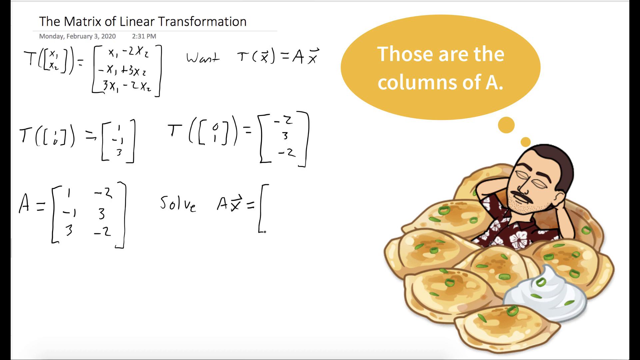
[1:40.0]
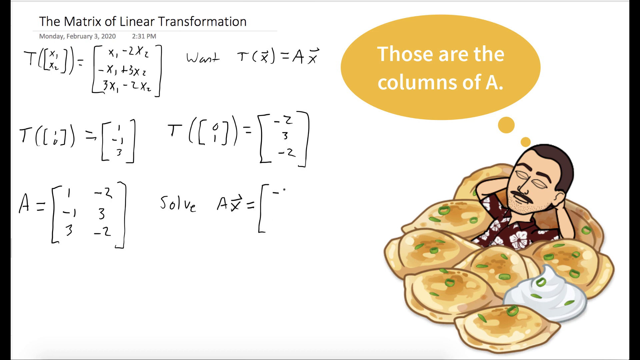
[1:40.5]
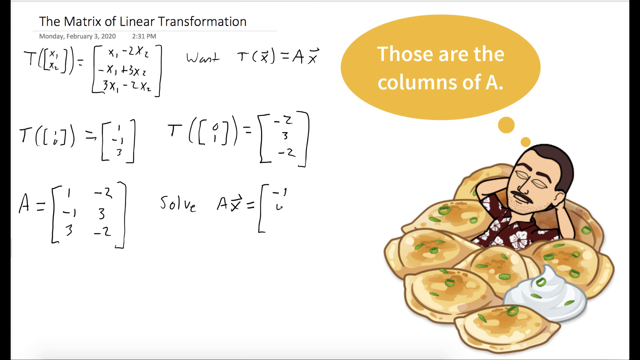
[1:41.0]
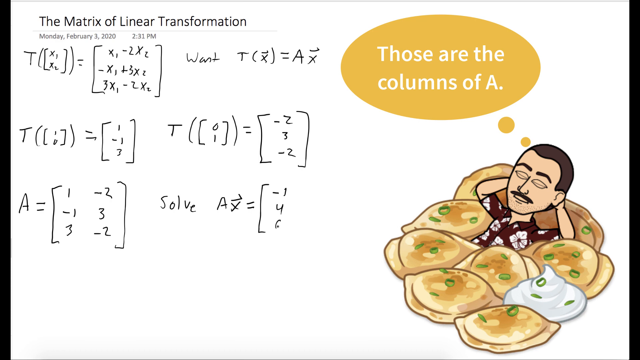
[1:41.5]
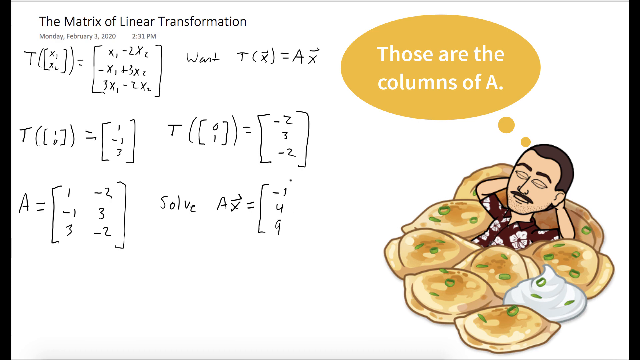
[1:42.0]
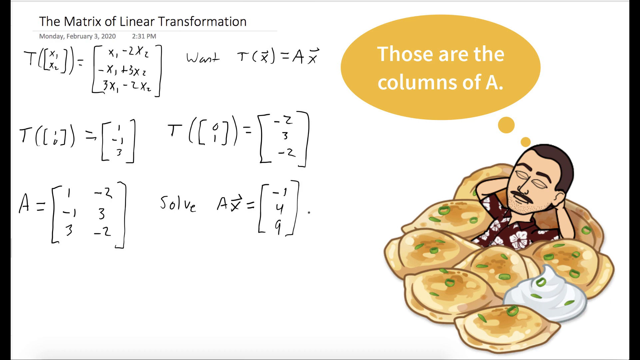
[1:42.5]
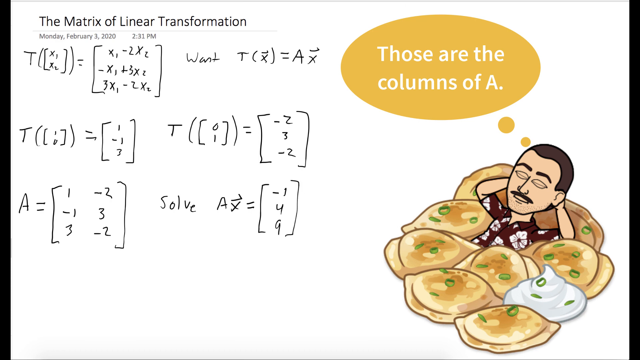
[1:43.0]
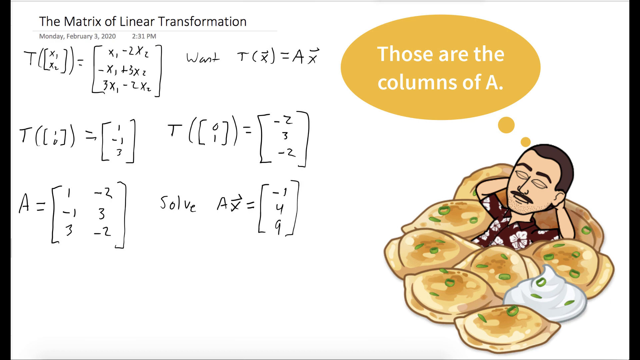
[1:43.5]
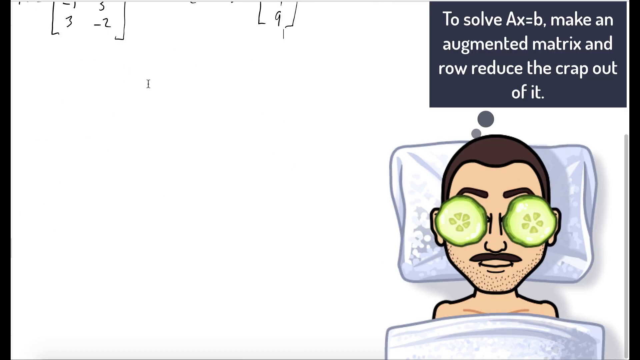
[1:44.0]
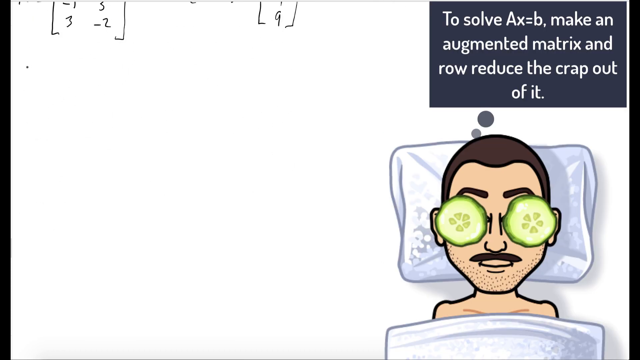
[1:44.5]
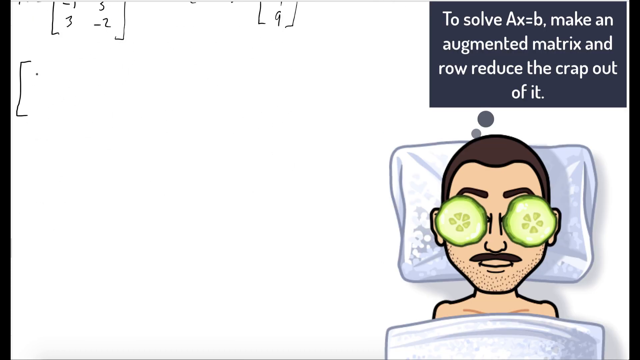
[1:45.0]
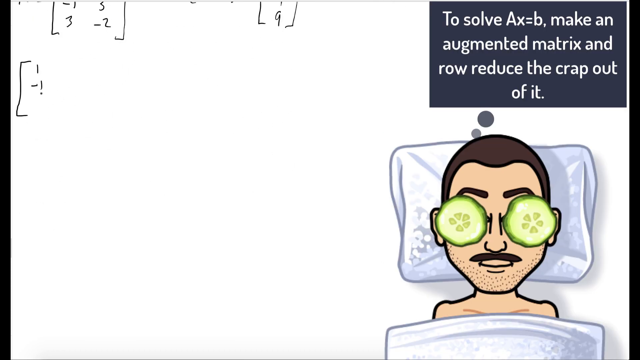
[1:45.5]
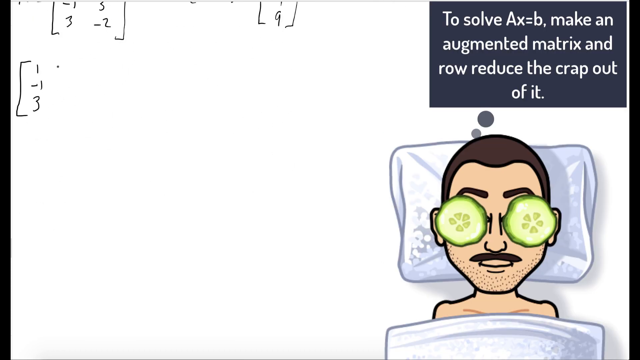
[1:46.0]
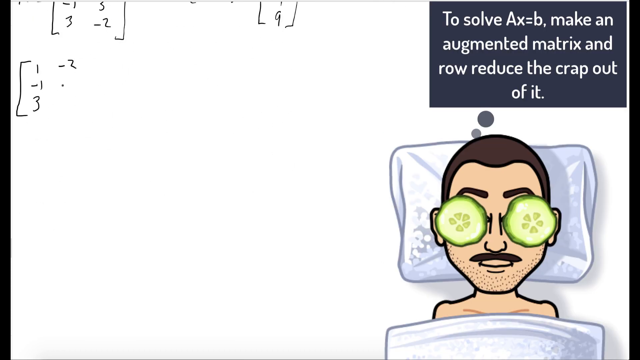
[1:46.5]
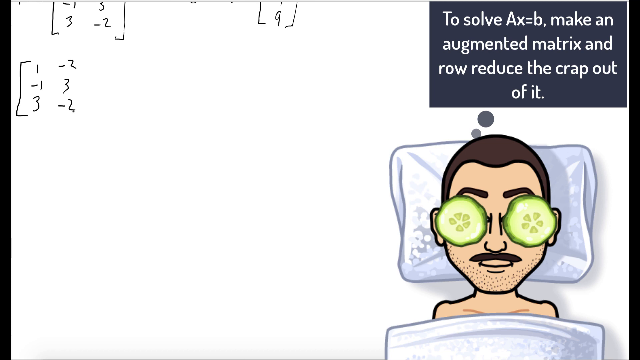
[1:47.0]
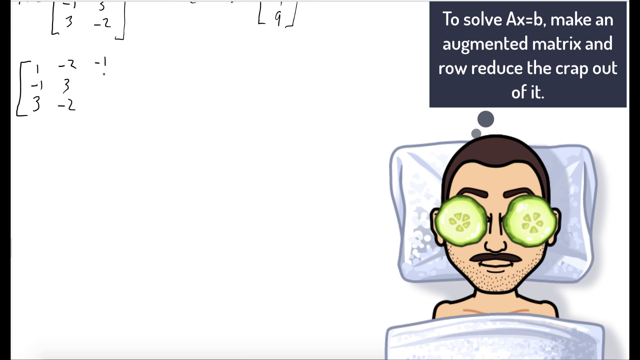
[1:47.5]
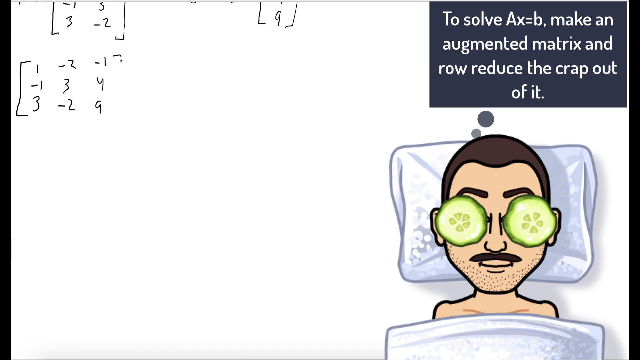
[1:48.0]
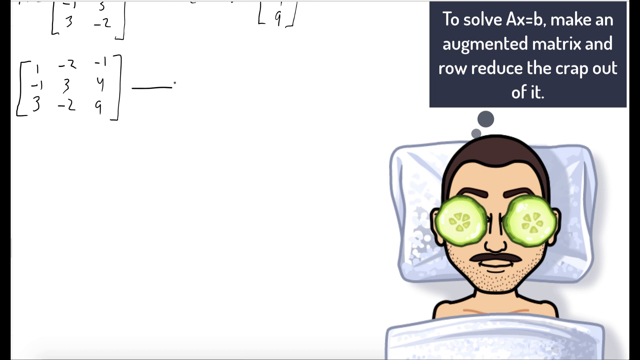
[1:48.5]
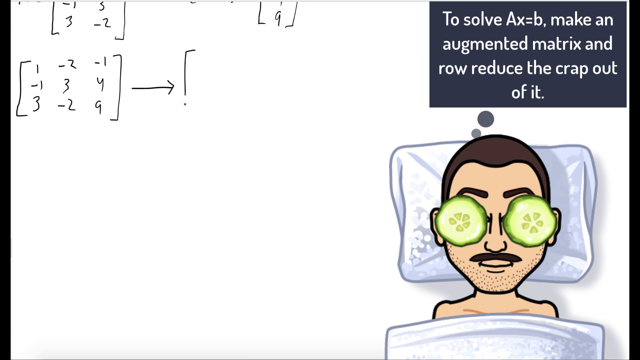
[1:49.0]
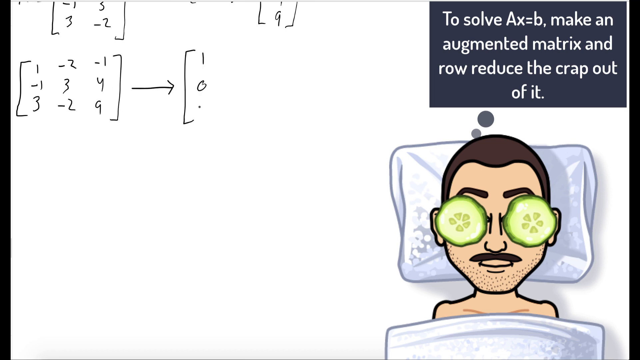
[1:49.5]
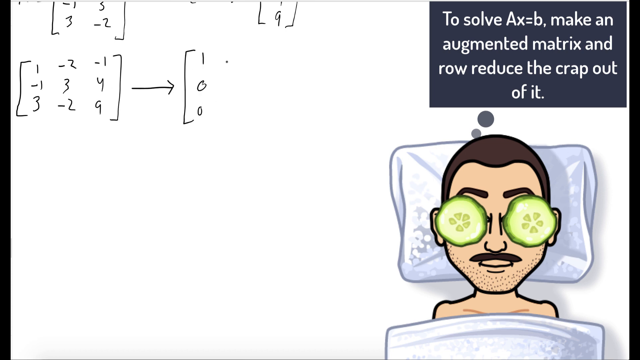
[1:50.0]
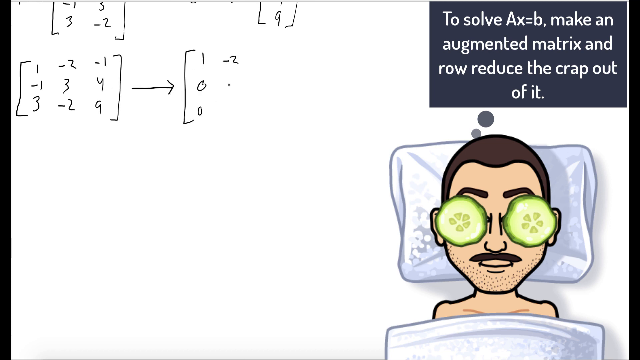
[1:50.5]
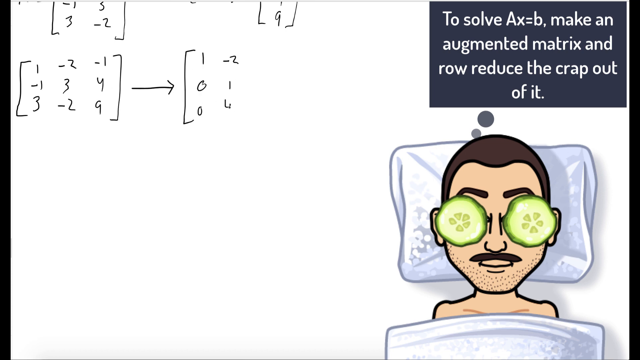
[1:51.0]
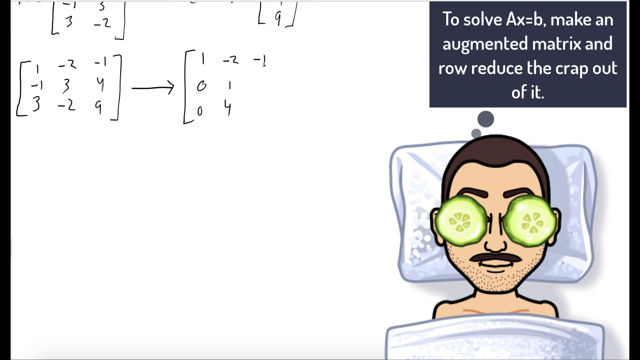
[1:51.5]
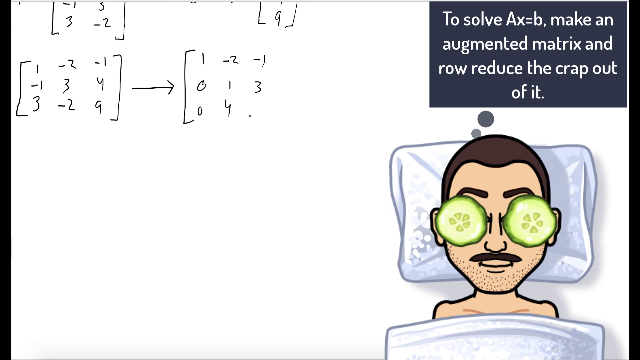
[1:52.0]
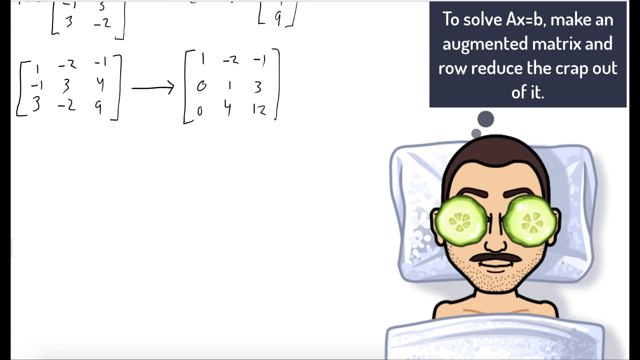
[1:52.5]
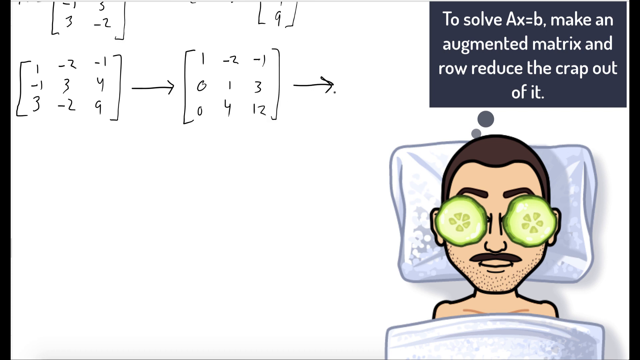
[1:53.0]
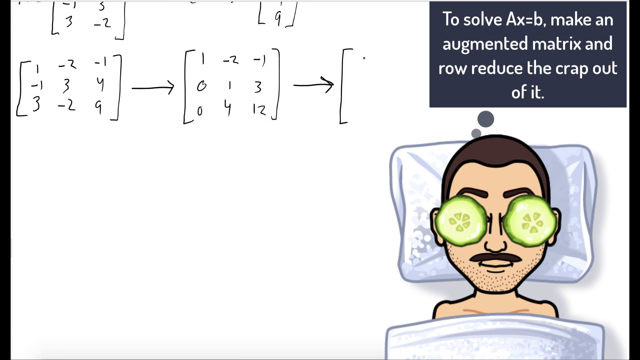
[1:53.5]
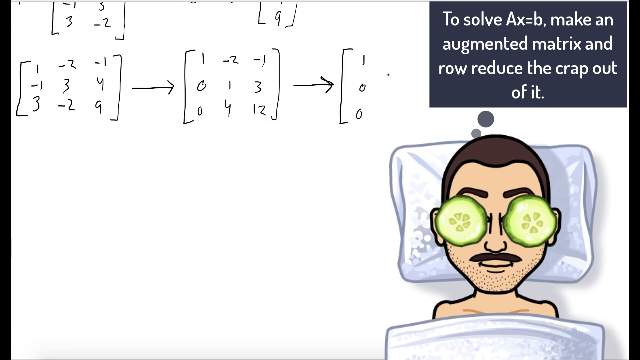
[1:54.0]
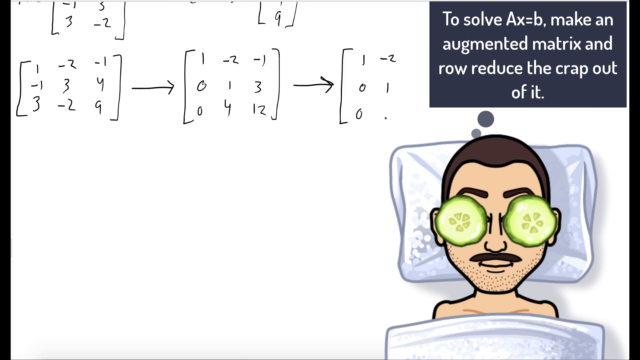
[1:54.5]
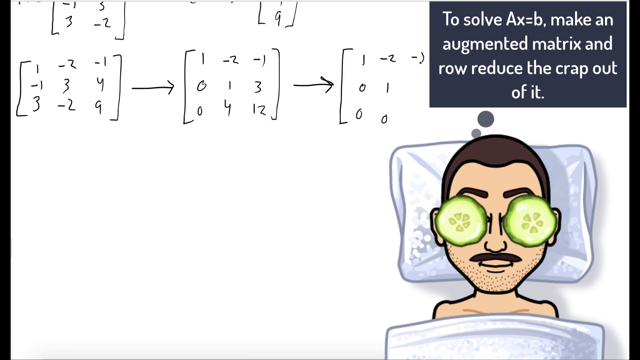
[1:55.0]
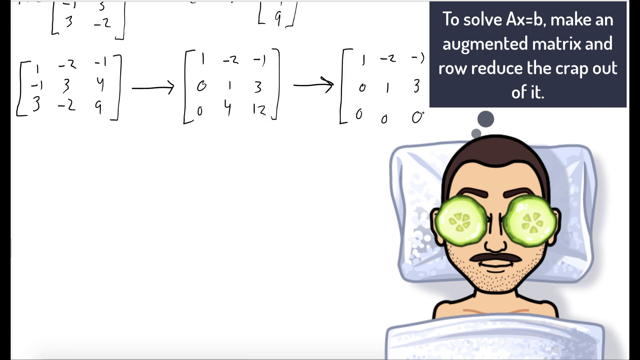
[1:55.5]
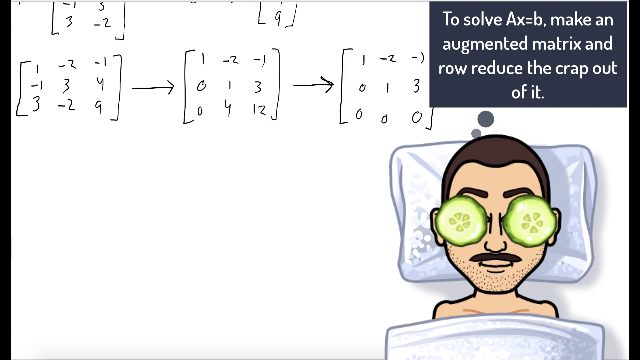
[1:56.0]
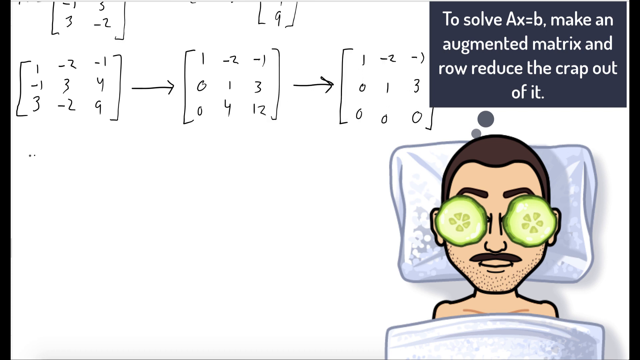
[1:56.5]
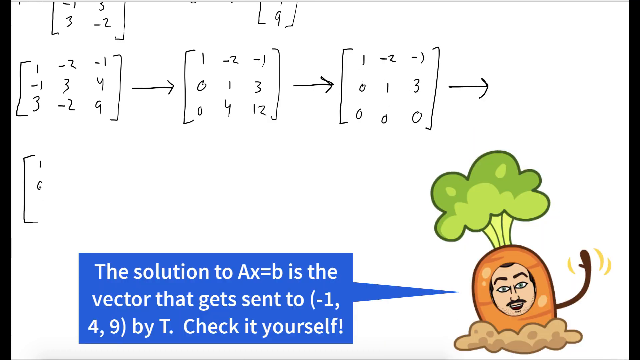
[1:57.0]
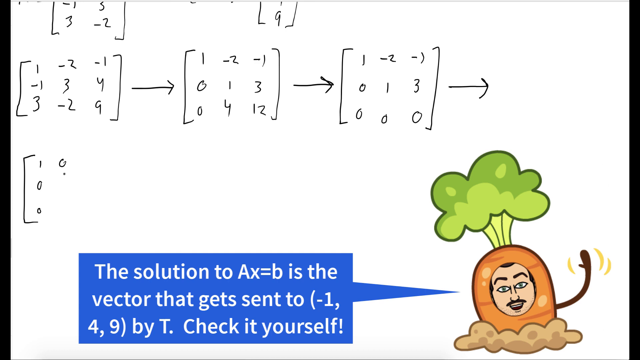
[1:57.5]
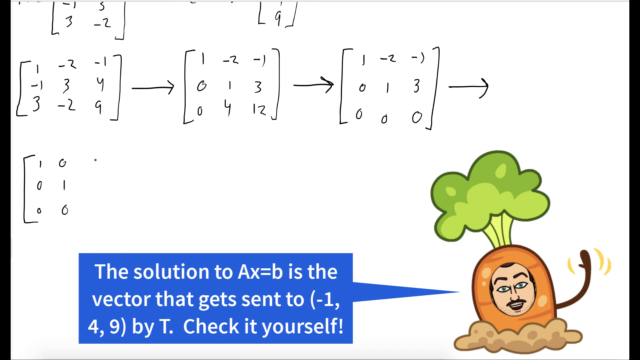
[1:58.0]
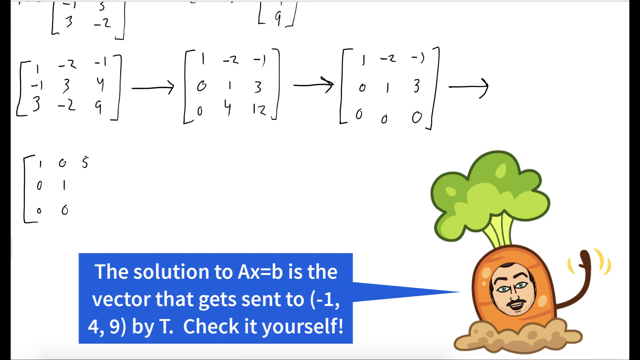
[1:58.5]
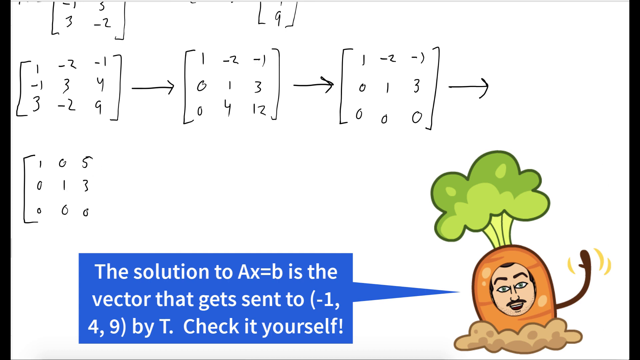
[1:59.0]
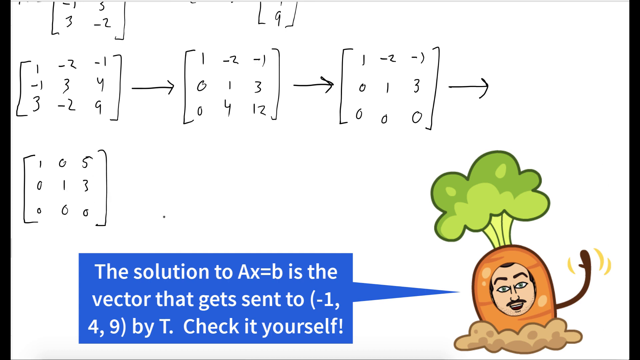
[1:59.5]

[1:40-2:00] He continues working through the problem, and his cartoon version changes again, now lying down in what seems like a spa scenario with cucumbers over his eyes, pretty much naked. A black speech bubble at the top right reads "to solve AX equals B, make an augmented matrix in row. Reduce the crap out of it." He arranges the numbers in a table-like fashion, first as something like a 3x3 arrangement and then the same for each following one, and the numbers are slowly reduced as he goes, many of them to zero.